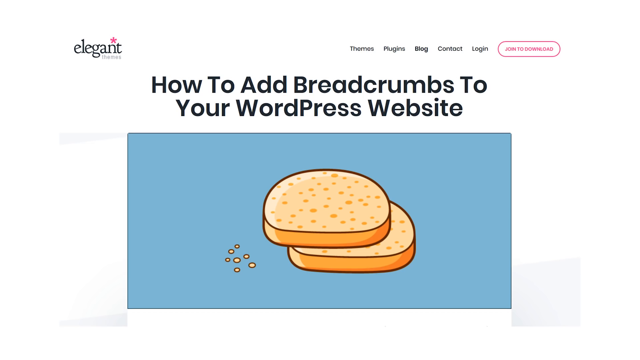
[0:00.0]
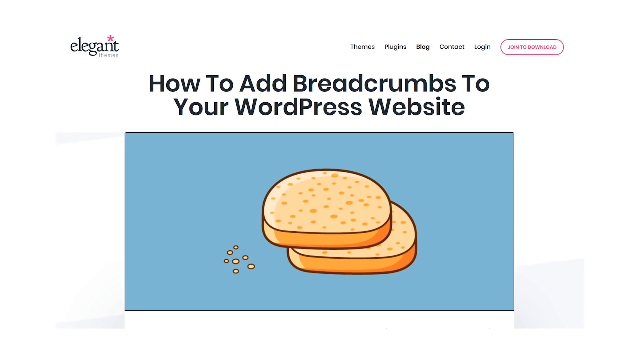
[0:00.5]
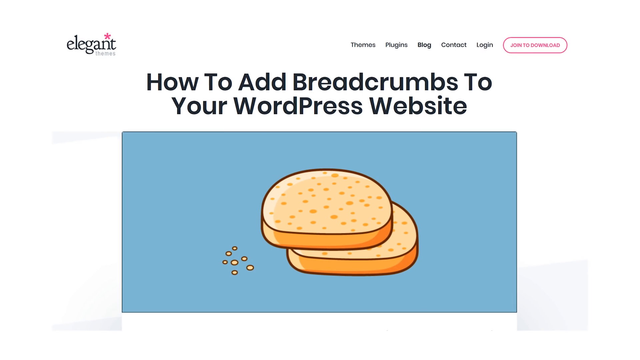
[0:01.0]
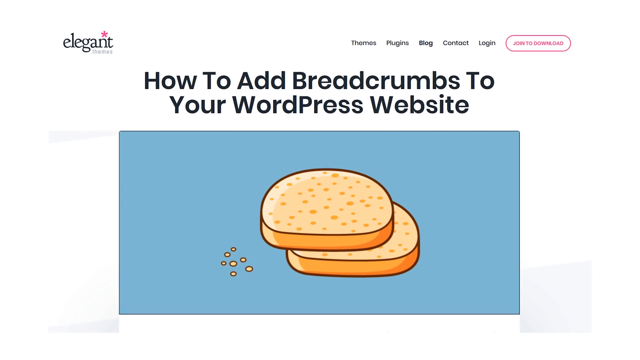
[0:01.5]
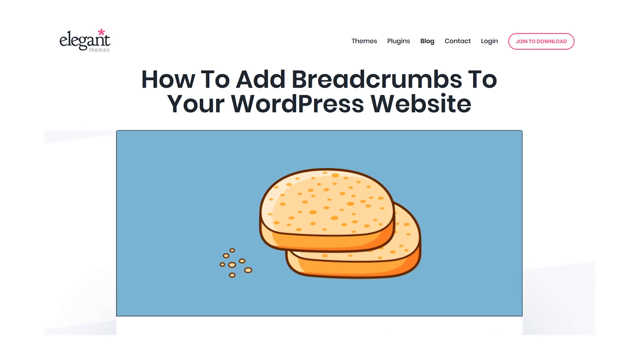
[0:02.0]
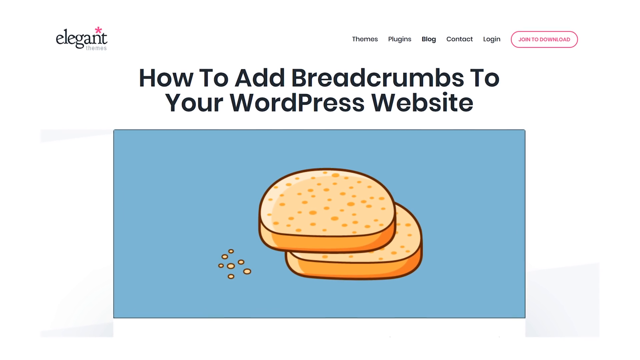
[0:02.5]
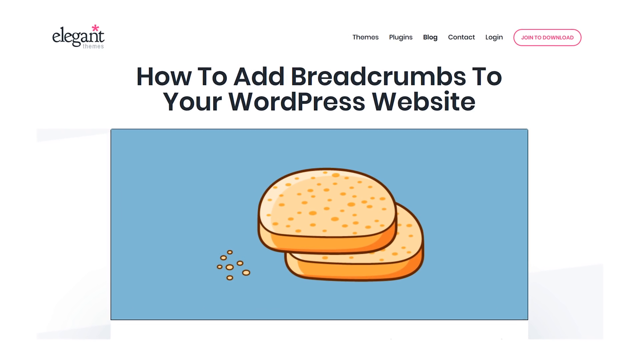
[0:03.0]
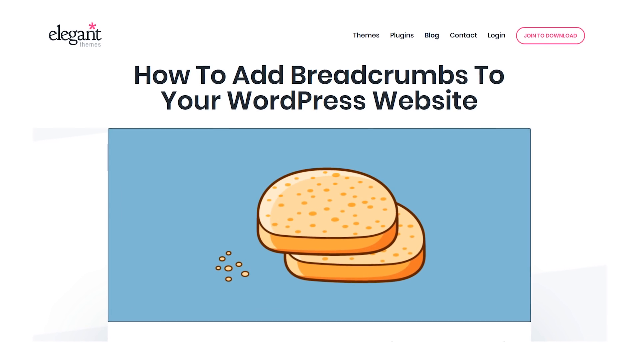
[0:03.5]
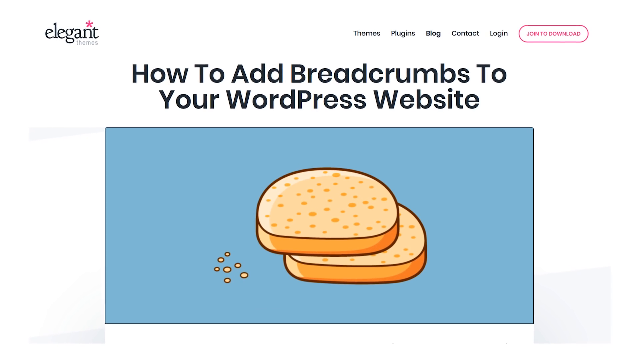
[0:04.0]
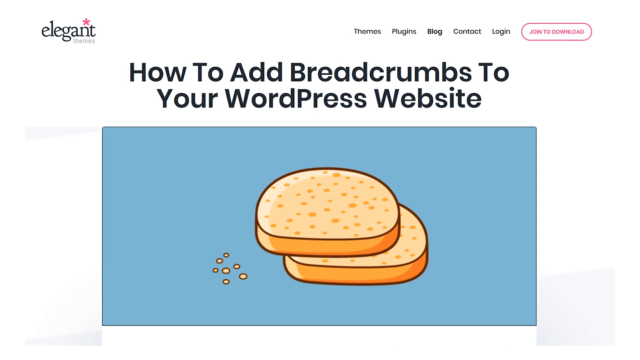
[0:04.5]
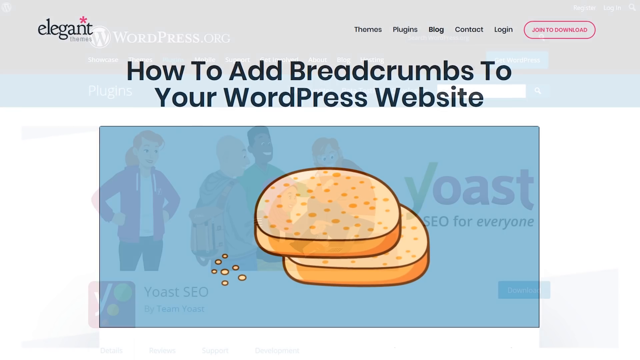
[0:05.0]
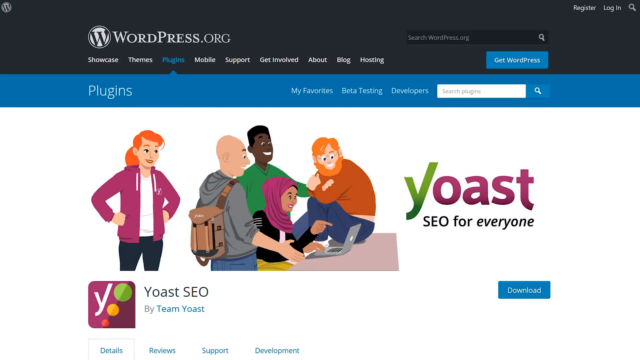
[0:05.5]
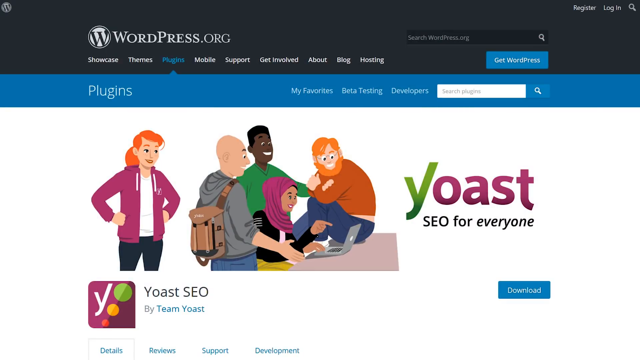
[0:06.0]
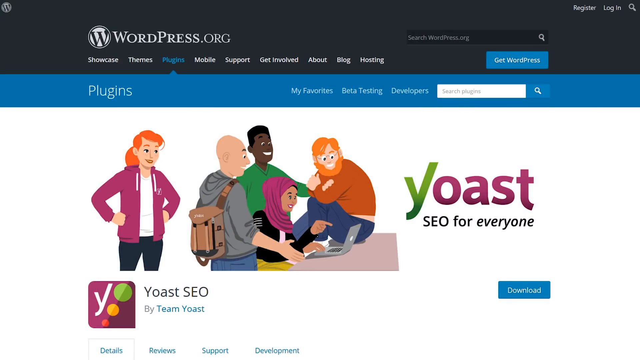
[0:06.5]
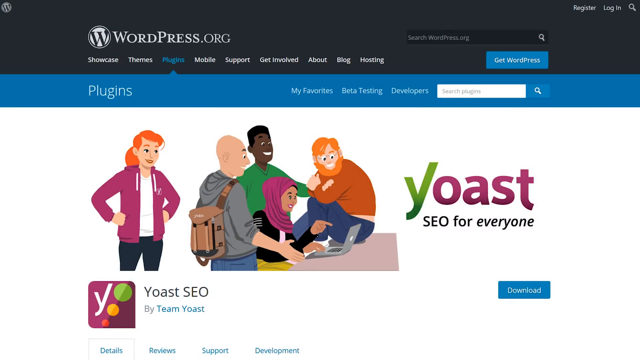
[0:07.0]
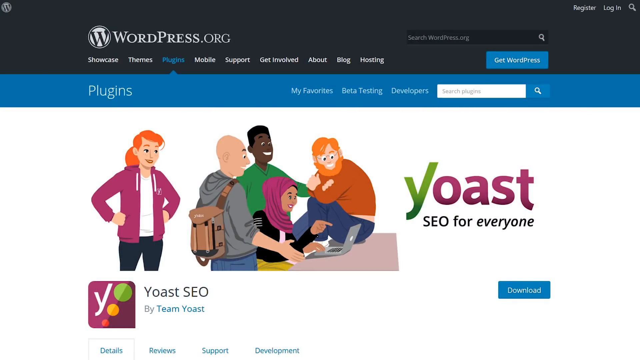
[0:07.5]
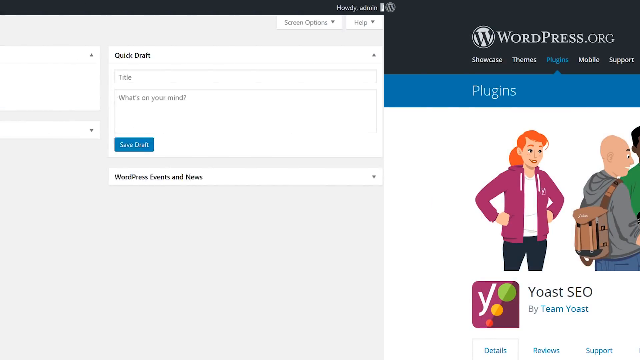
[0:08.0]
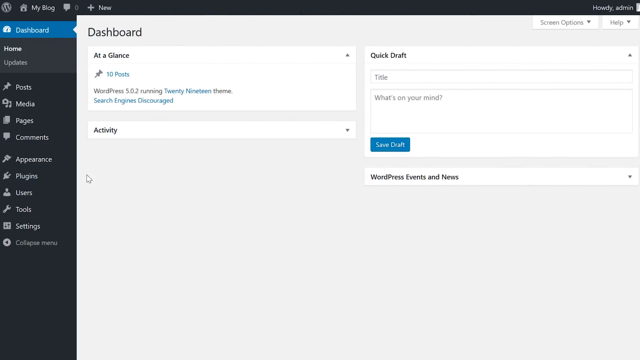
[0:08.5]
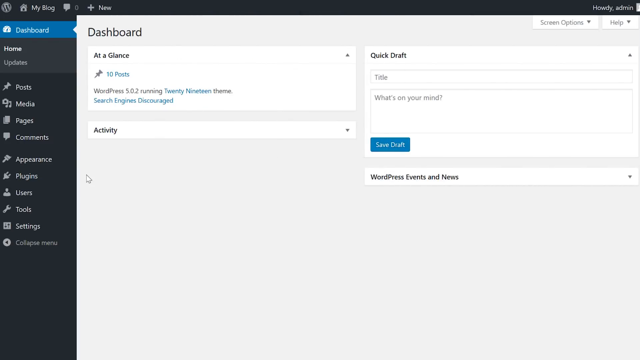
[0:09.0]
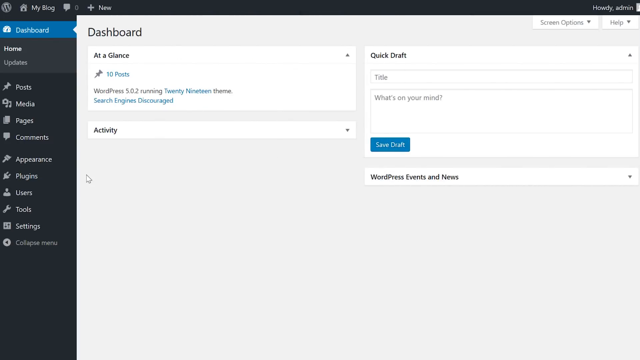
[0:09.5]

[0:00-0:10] The video opens on a screenshot of a website called Elegant. On the page is a cartoon-style image of two bread slices on a blue background. Above it is the title "how to add breadcrumbs to your WordPress website", and above that, to the right, are "themes", "plugins", "blog", "contact", "login" and "join to download". On the left side, above the title, is "Elegant". The video slowly zooms into the website and fades to a screenshot of the plugin section on WordPress.org, with an image under a section that says "Yoast SEO for Everyone". The screen then slides to the right and opens a dashboard on the WordPress website. The at-a-glance section shows ten posts, there is an activity section, and there is a quick draft type section on the right. A sidebar on the left shows the different dashboard options.